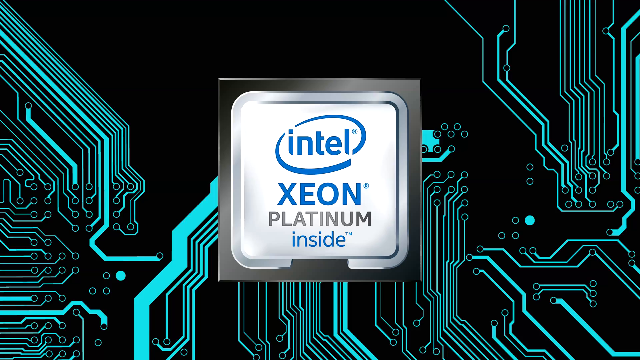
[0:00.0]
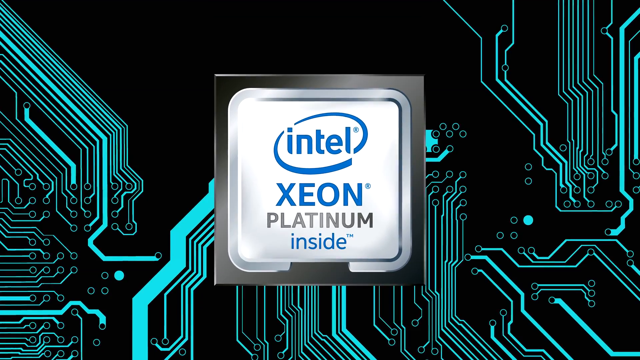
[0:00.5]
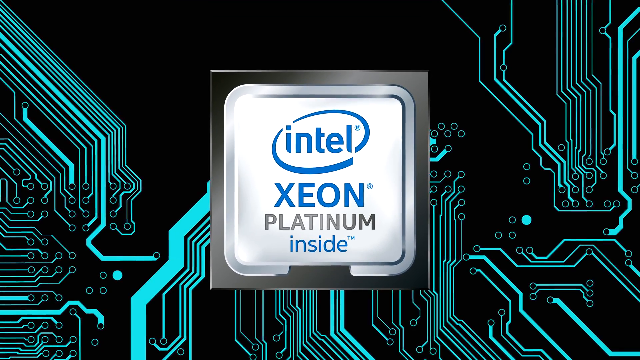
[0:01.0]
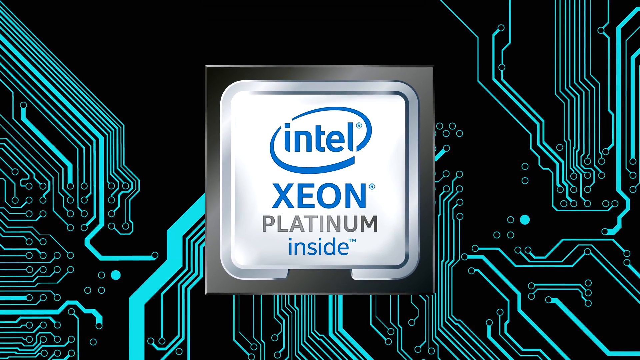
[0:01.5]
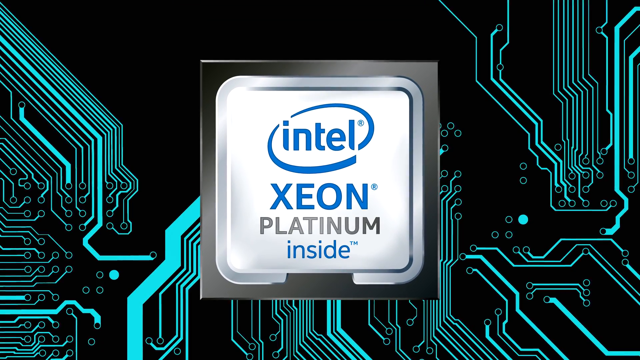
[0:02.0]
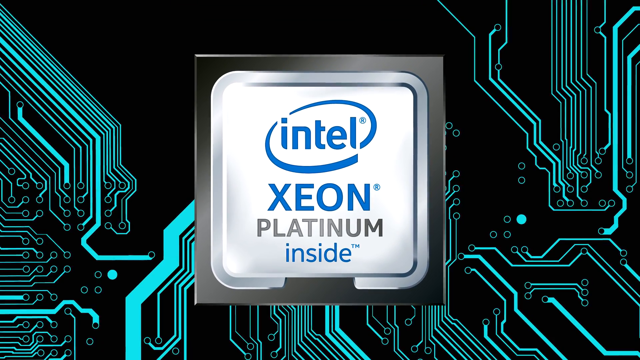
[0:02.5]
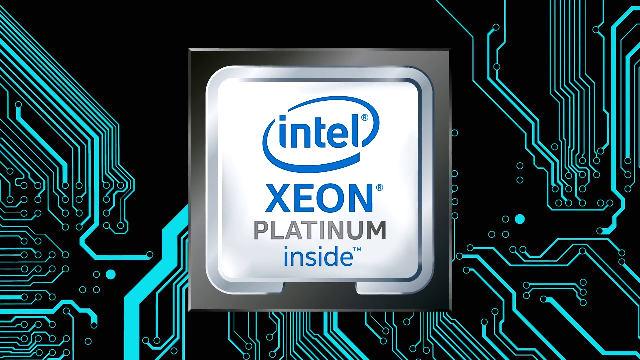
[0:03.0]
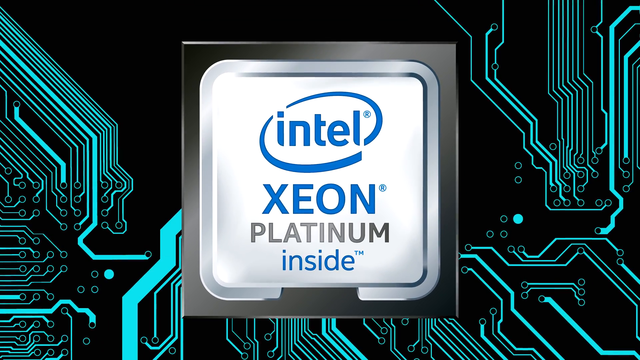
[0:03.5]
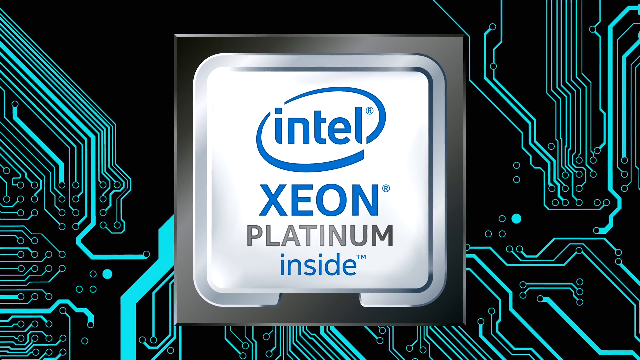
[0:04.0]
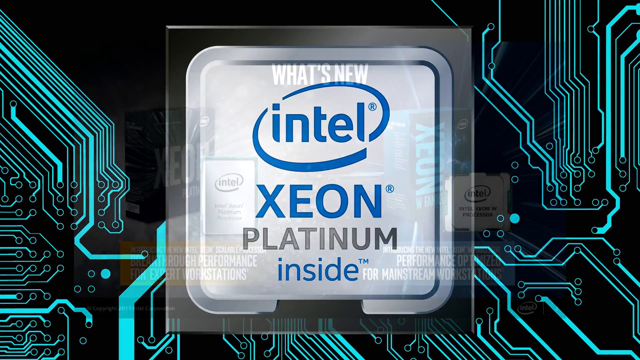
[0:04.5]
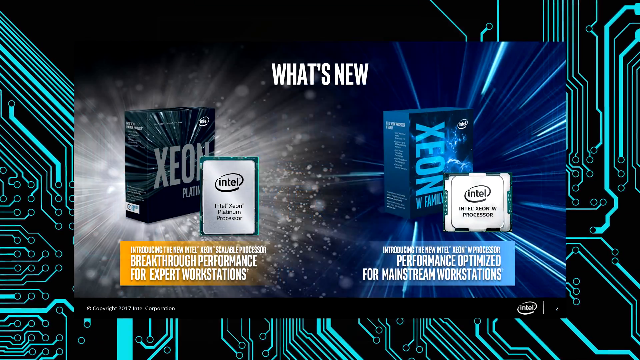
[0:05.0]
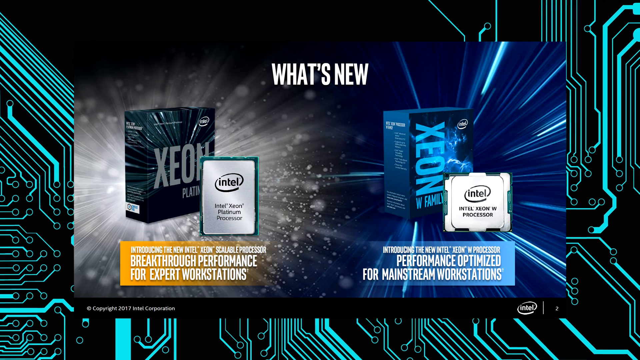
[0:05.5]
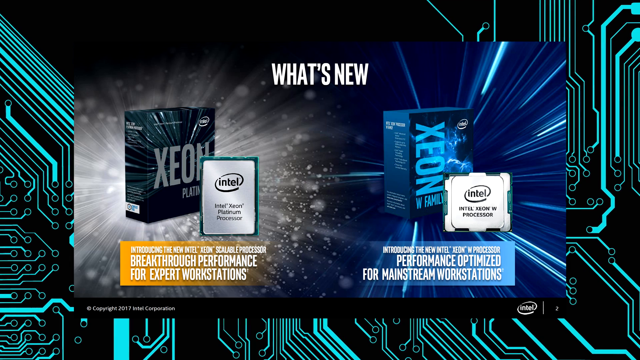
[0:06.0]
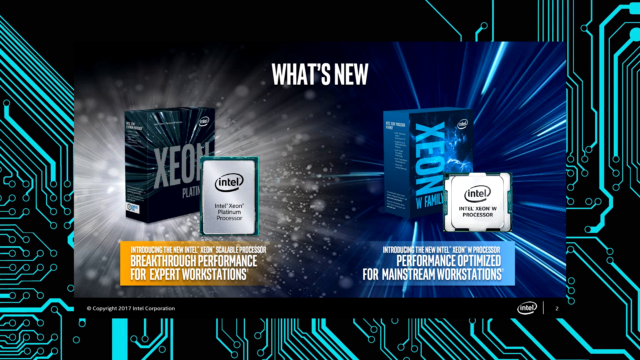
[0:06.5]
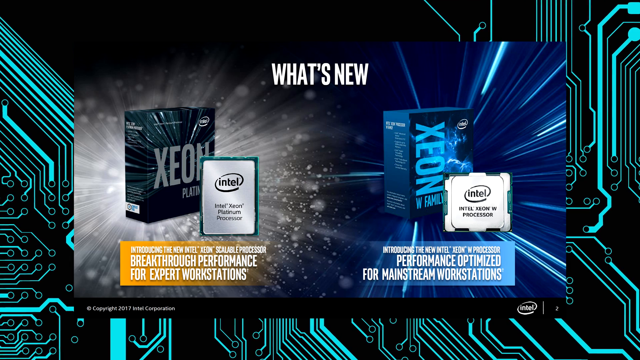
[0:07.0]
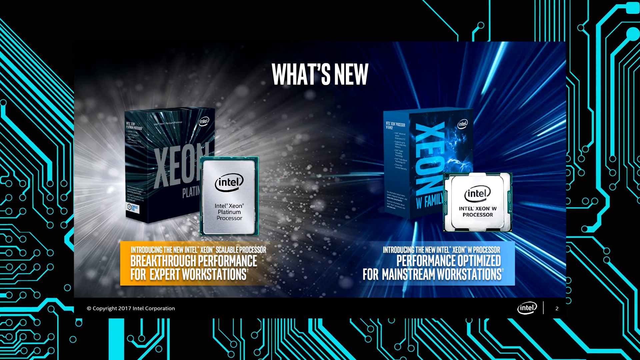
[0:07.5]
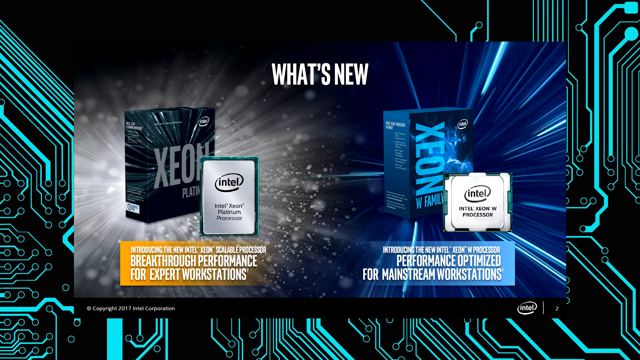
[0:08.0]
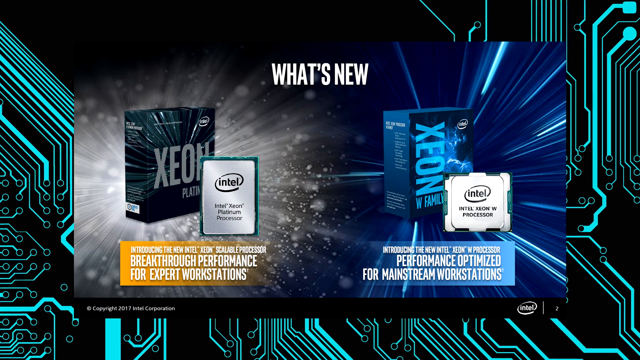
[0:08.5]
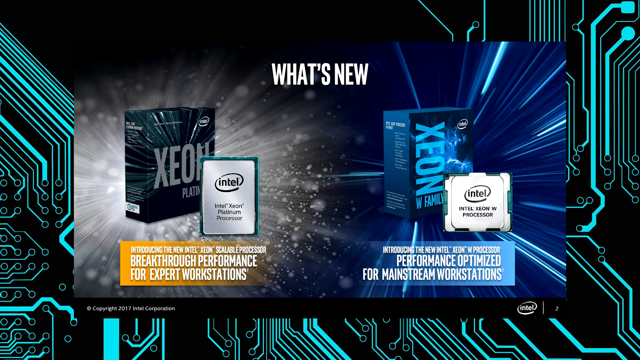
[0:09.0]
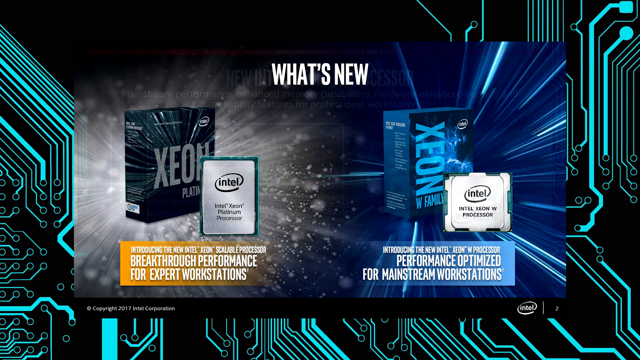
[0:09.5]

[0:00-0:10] The logo "Intel Xenon Platinum Inside" flashes on screen along with the words "what's new", and the video seems to be comparing Intel chips. The graphics are very futuristic, looking somewhat like Tron, with green-blue computer wiring in the background. The Intel Xenon Platinum Inside logo is visible and appears to come toward the viewer. Two different Xenon chips then flash on screen side by side, as if they are being compared. One has darker black-gray packaging and the other has bluish packaging; one is labeled as breakthrough performance for expert workstations and the other as performance optimized for mainstream workstations. These are superimposed over the Tron-like computer graphic.